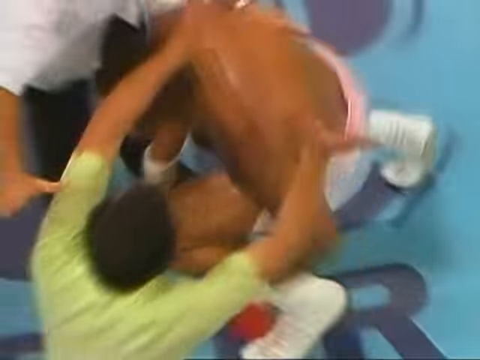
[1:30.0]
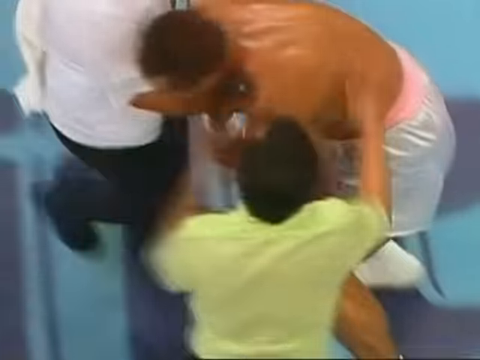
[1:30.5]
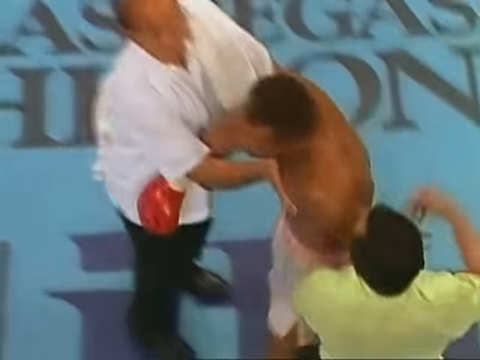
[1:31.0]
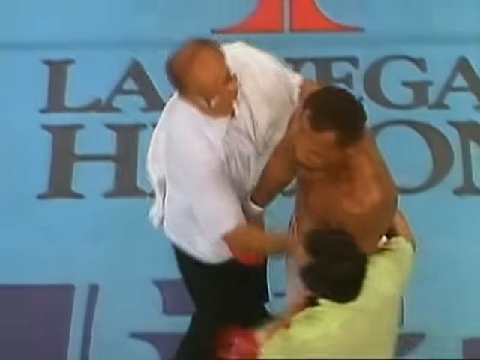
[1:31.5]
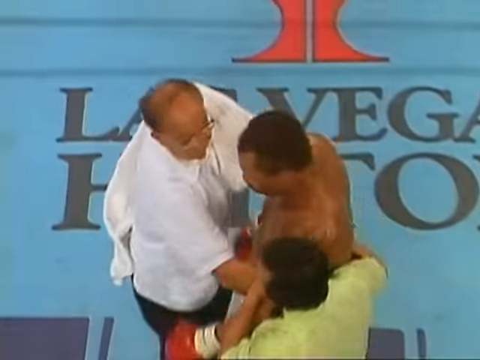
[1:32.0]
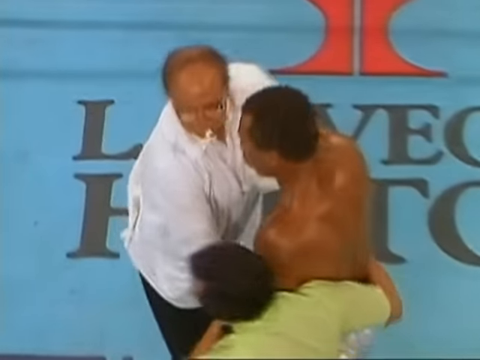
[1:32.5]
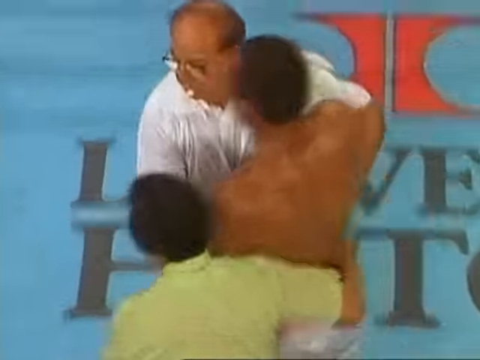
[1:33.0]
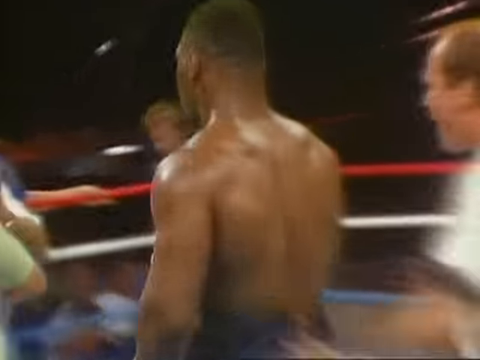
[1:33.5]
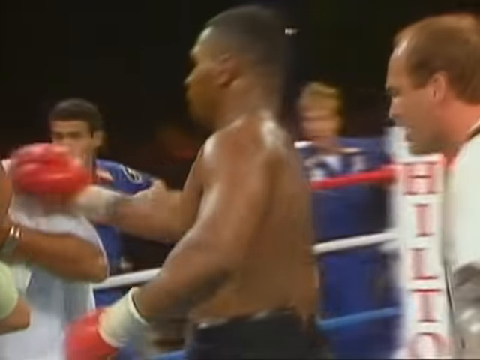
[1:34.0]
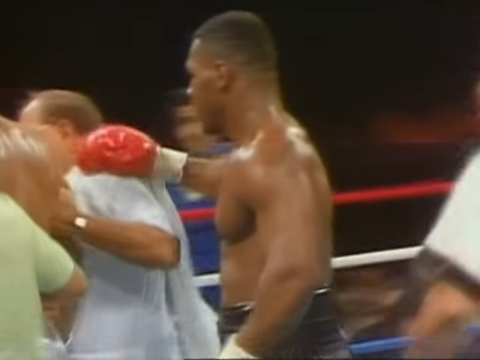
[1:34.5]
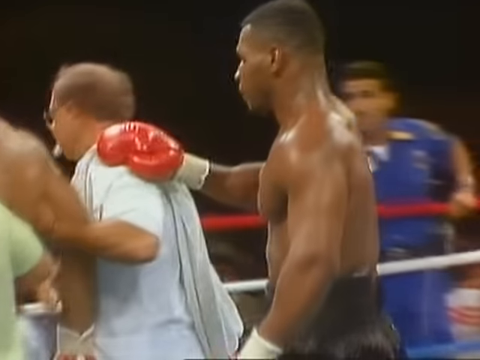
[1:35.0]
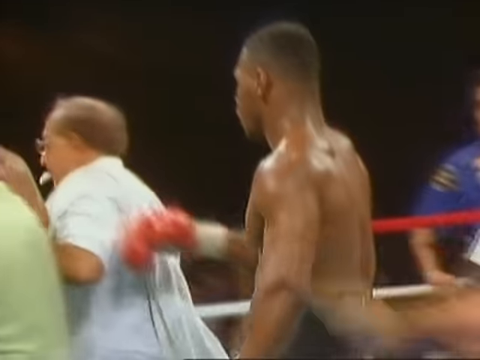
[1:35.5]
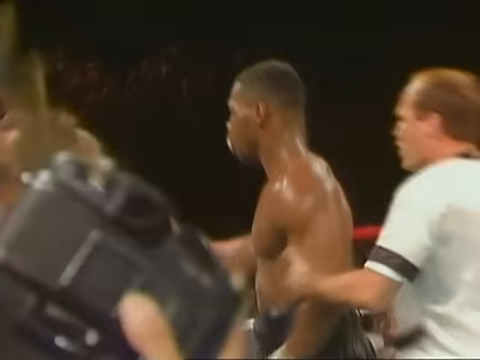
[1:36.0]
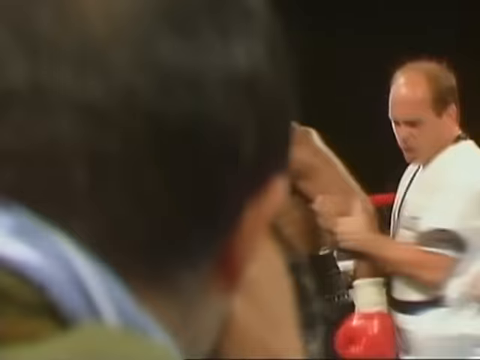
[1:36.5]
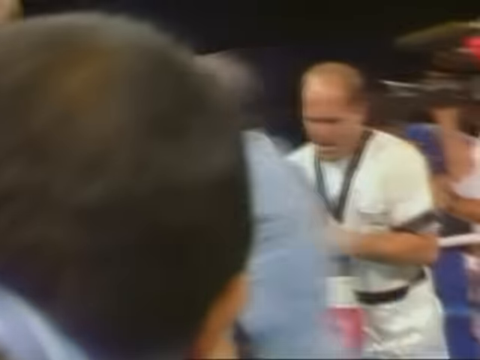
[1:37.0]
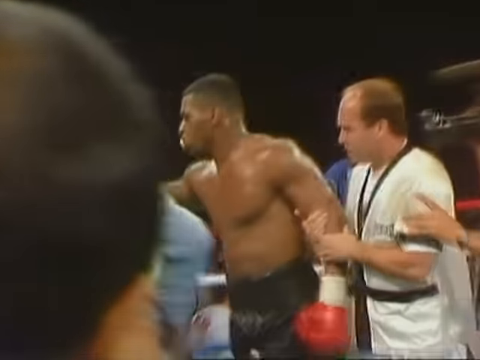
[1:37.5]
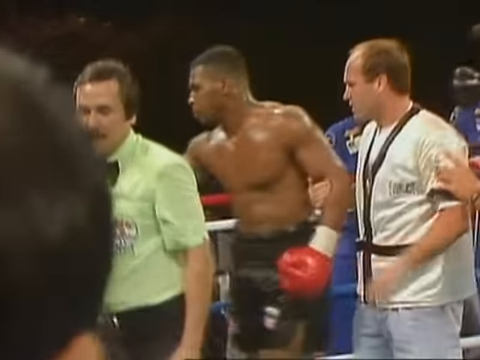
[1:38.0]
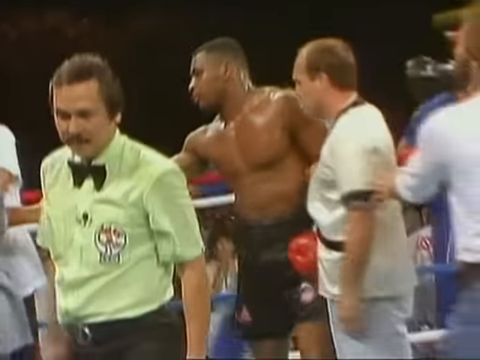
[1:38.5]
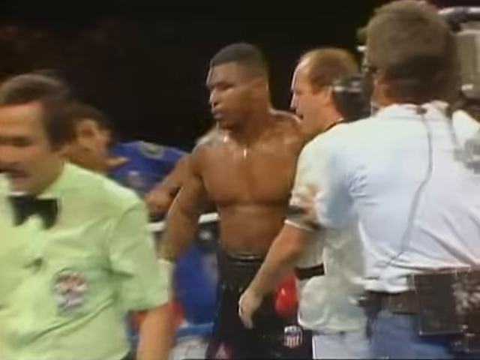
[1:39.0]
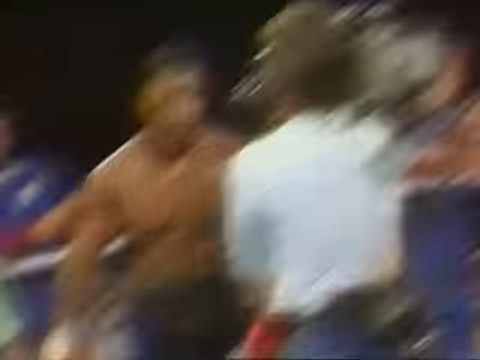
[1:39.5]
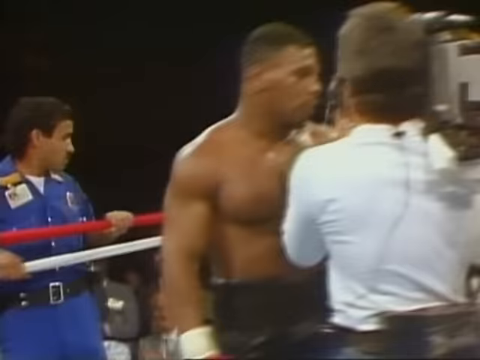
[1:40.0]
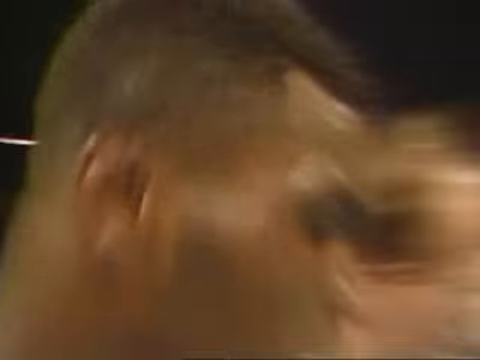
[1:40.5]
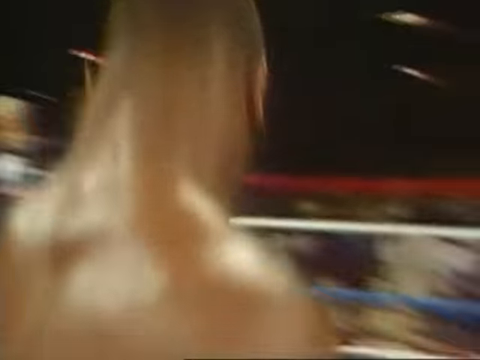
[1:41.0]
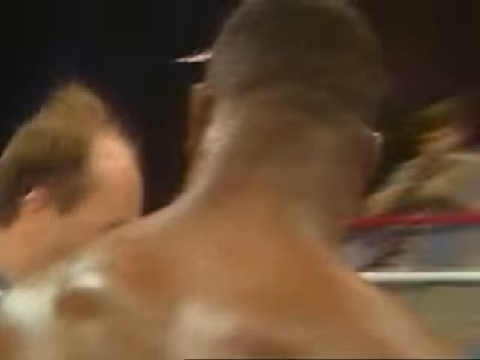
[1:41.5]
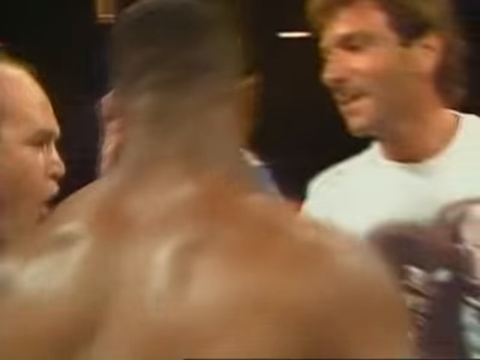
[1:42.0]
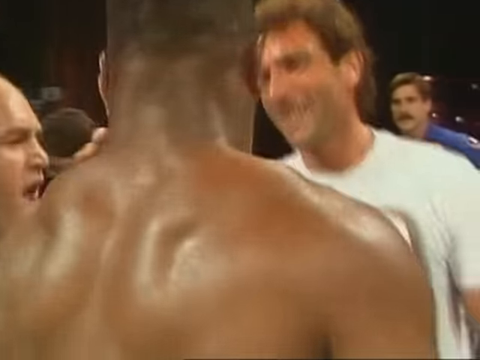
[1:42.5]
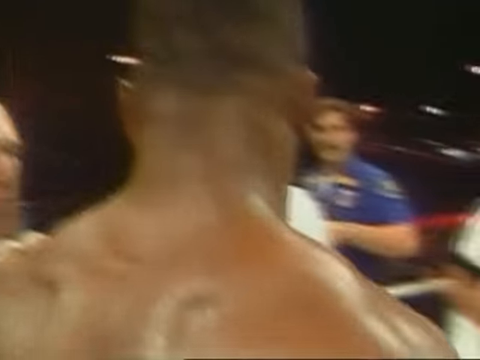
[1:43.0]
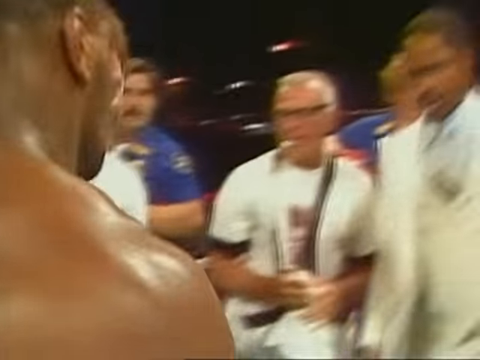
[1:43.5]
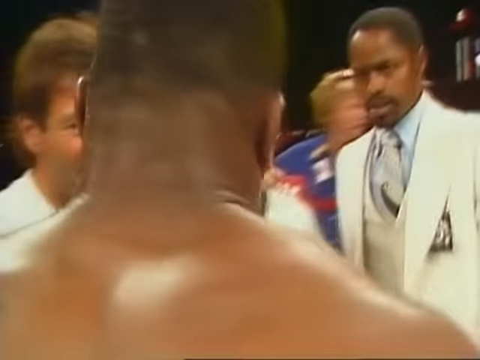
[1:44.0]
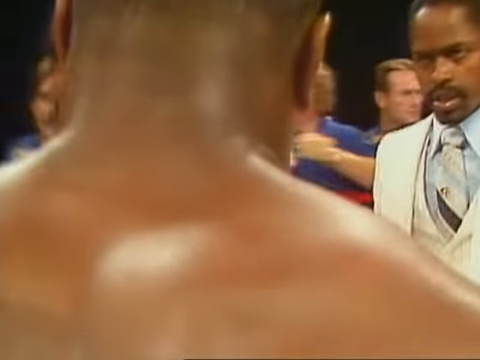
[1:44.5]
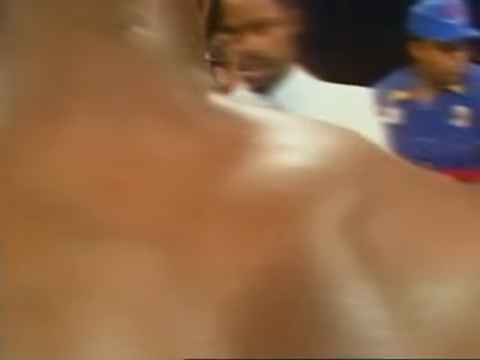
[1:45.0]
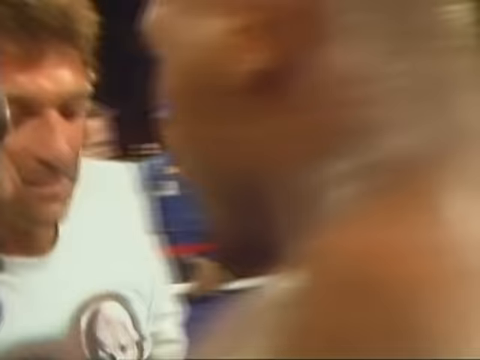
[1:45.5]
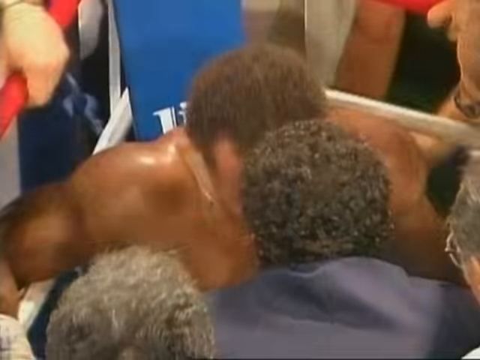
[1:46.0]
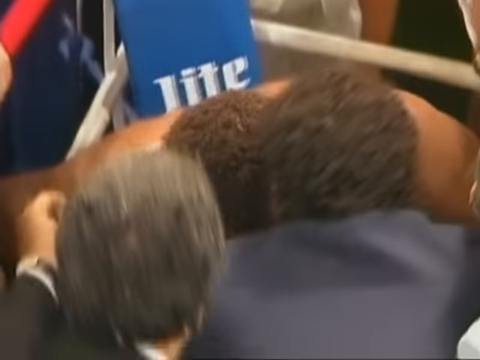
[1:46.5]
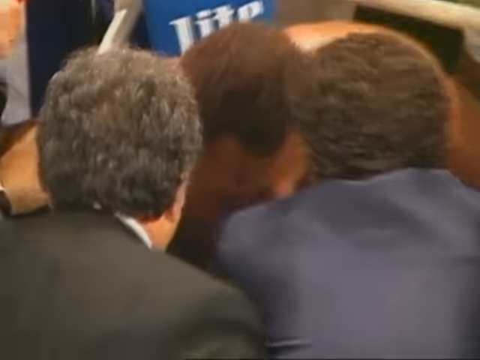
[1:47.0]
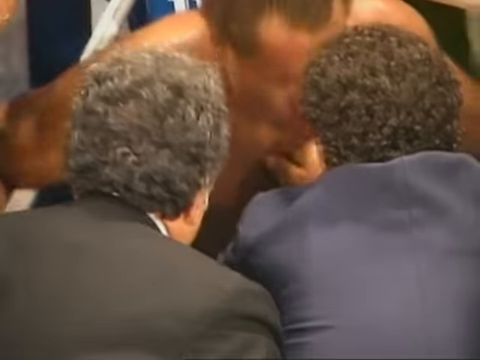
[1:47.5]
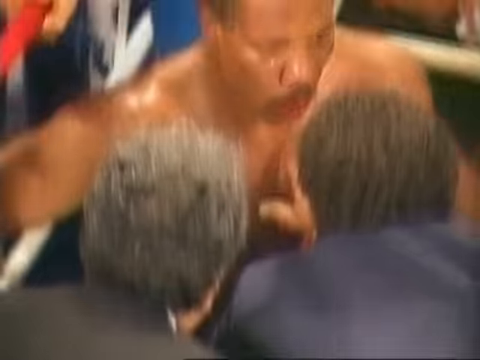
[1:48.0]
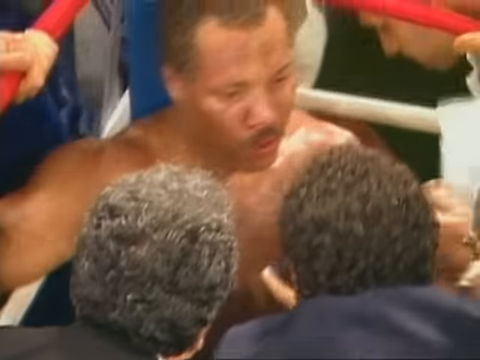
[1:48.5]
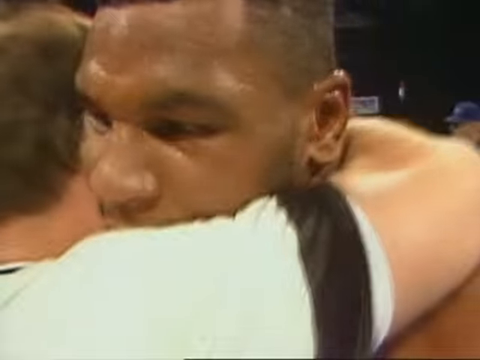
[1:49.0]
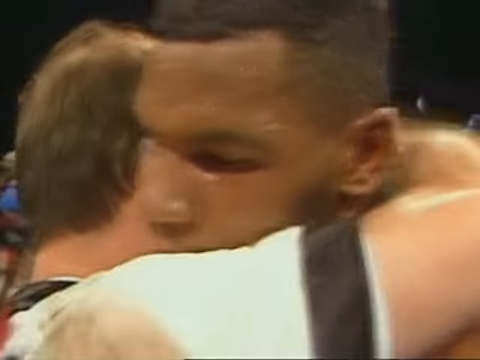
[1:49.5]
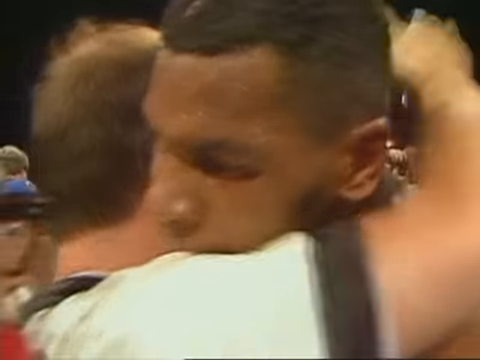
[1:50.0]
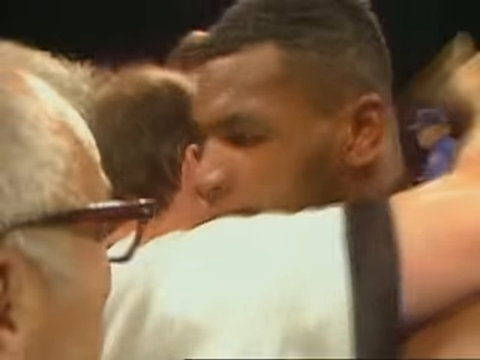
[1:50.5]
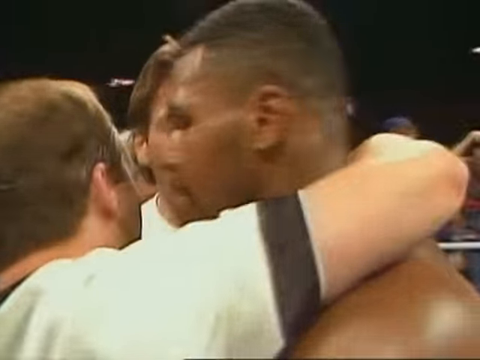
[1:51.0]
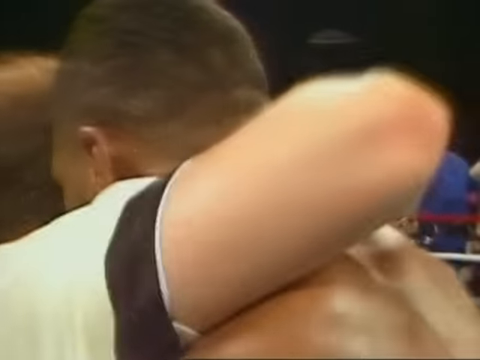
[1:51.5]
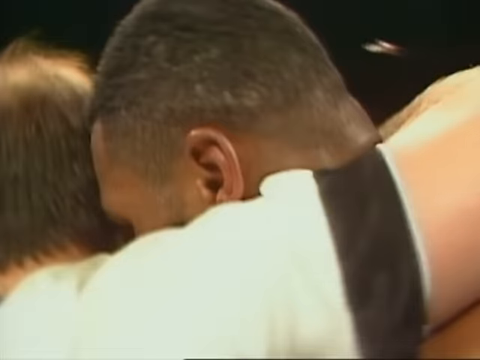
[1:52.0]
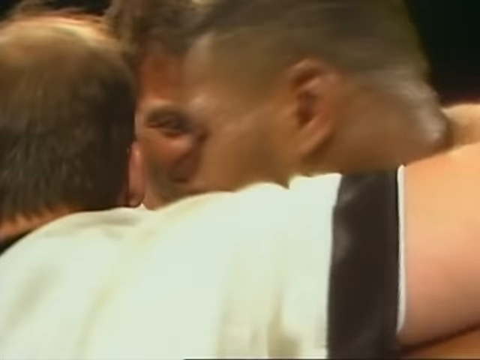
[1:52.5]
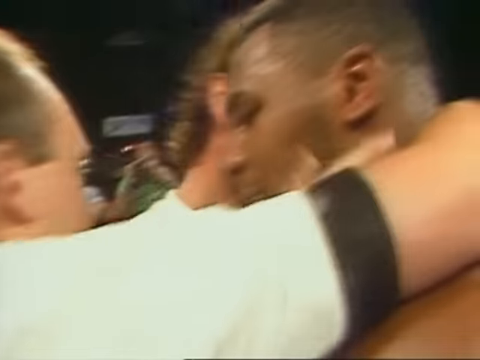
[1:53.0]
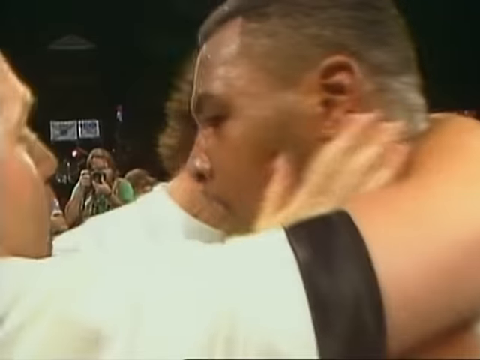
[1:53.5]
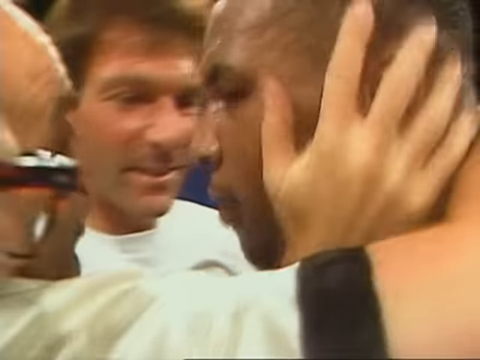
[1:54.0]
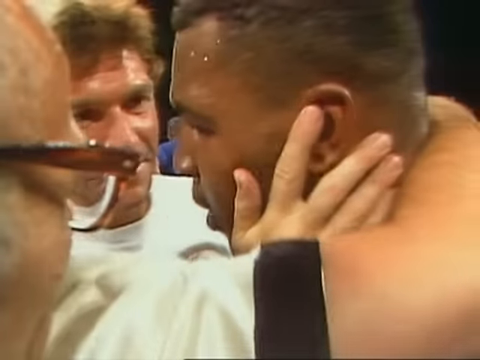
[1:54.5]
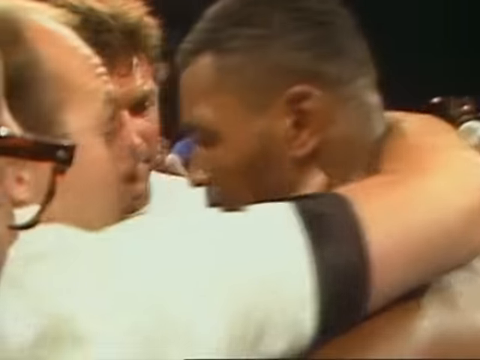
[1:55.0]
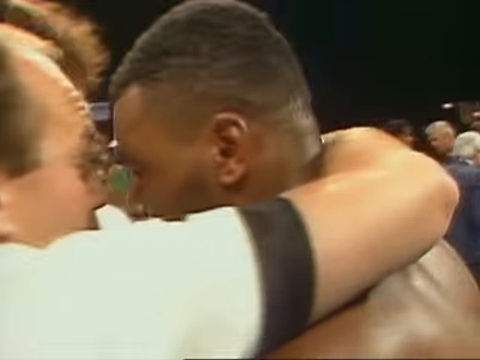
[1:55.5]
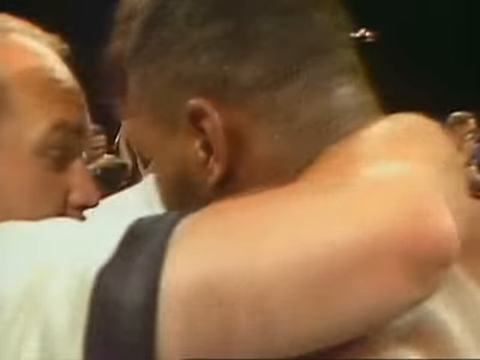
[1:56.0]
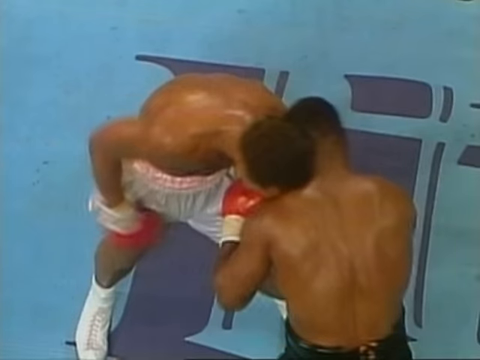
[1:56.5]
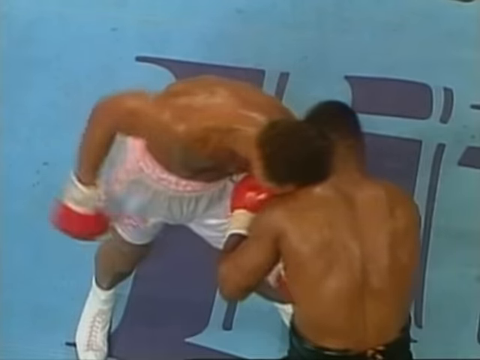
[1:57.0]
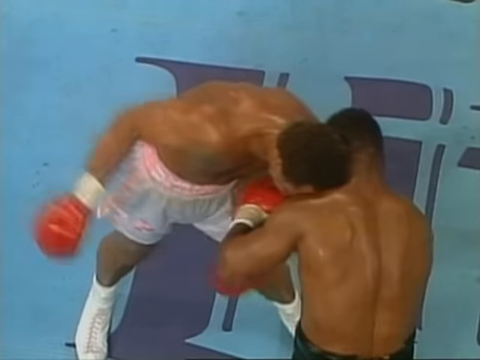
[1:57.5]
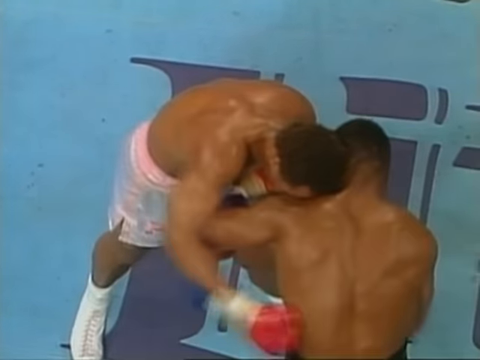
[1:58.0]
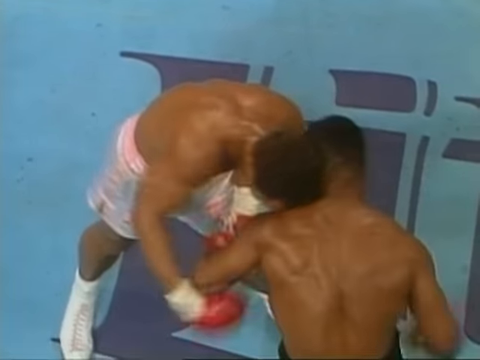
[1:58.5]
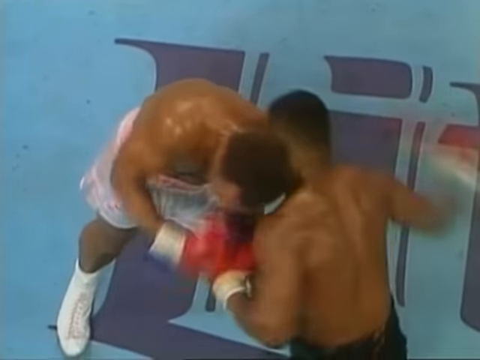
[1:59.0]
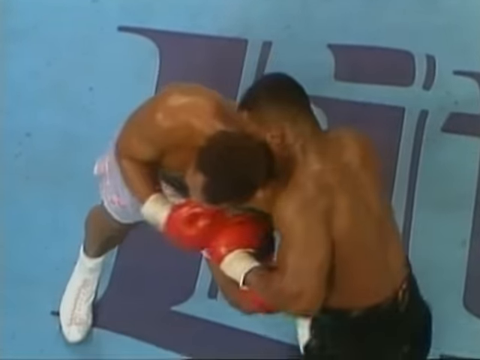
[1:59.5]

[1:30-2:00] The boxer in white trunks stumbles up, trying to get on his feet, seen from a camera looking directly down. The referee is at his left counting him down, and what looks like his trainer is in front of him. The fight appears to be getting called, since even though he got up he is badly stumbling and seems disoriented. The referee and the trainer help the boxer to his corner. Tyson moves from right to left across the frame, and his trainers are visible. He goes up to one of his opponent's trainers and almost taps him on the shoulder, apparently to make sure he is okay, then heads back to his corner, where several trainers are sitting and talking to him. A close-up shows the knocked-out boxer sitting on his stool while a couple of men in suits, who look like doctors, ask him questions. Then a close-up shows Tyson being hugged by his trainer and patted on the back with the trainer's right hand; another trainer comes up to him. The trainer with his arm around Tyson is face to face with him, saying something. A high overview then shows what appears to be a replay, with Tyson hitting body blows while the two are close together.